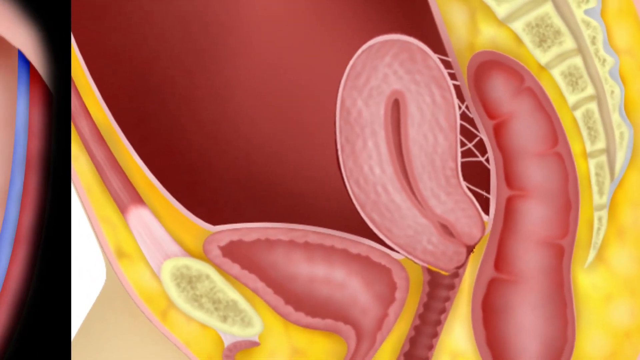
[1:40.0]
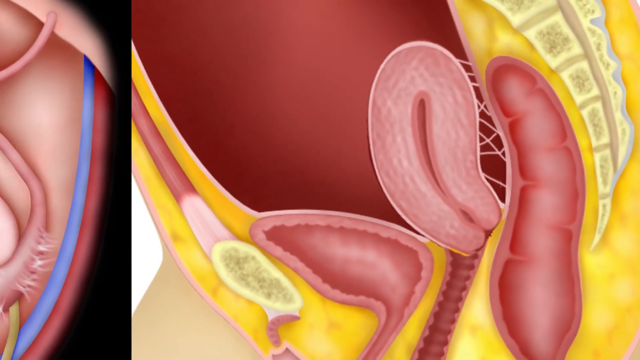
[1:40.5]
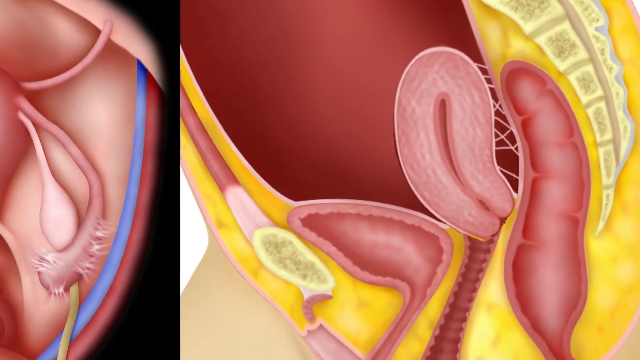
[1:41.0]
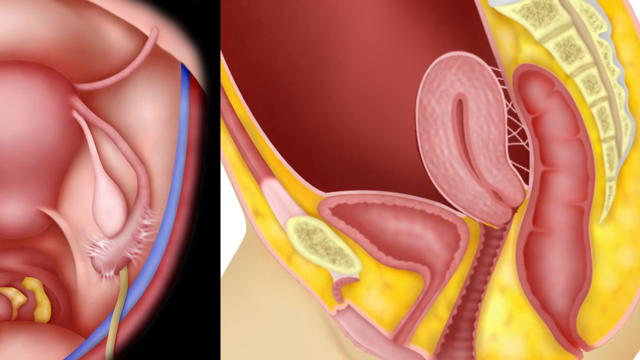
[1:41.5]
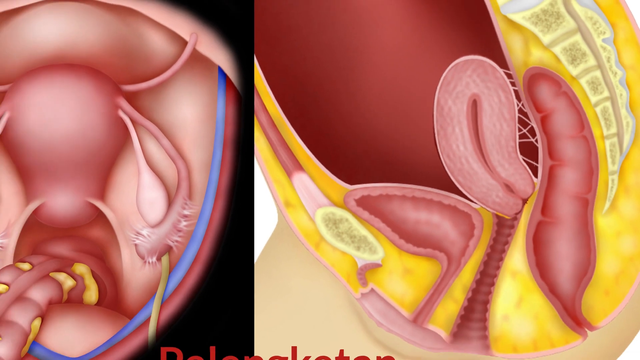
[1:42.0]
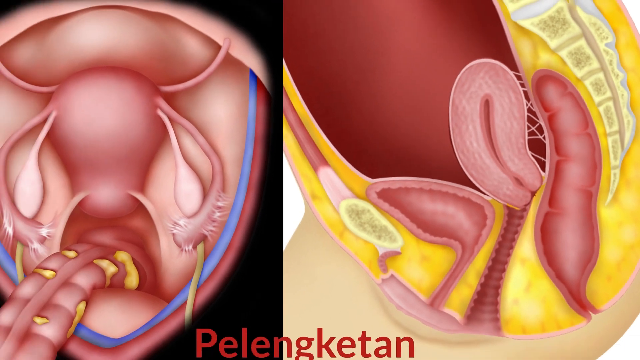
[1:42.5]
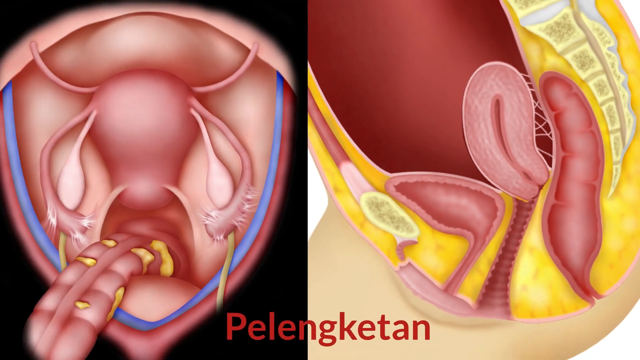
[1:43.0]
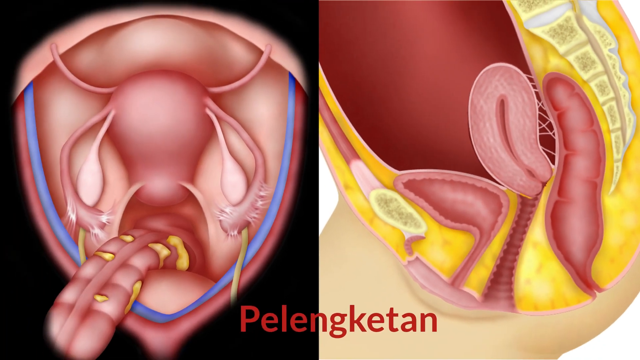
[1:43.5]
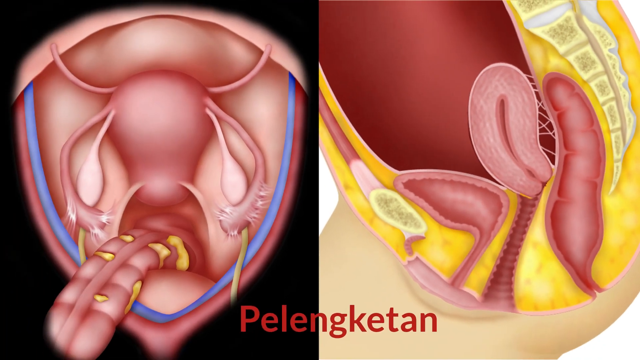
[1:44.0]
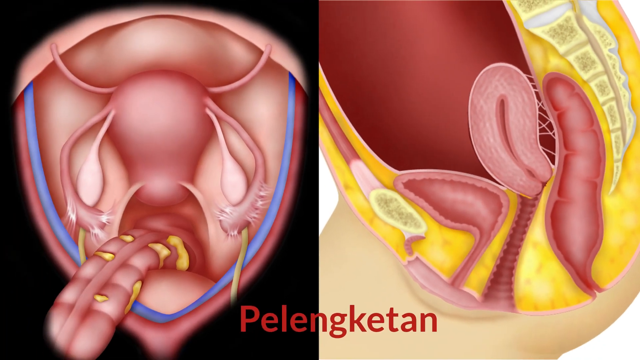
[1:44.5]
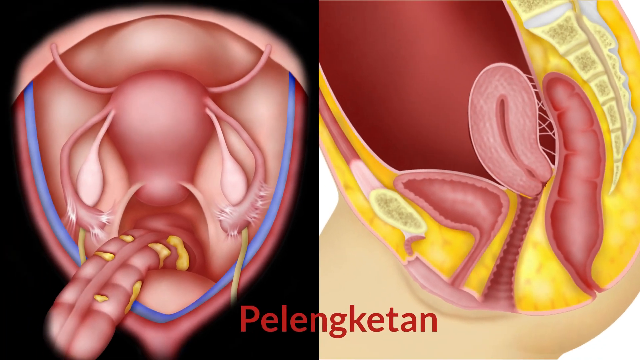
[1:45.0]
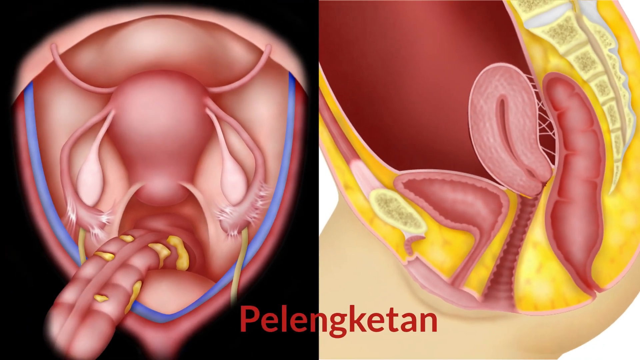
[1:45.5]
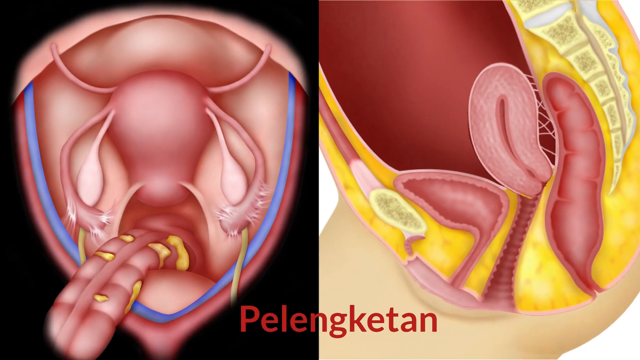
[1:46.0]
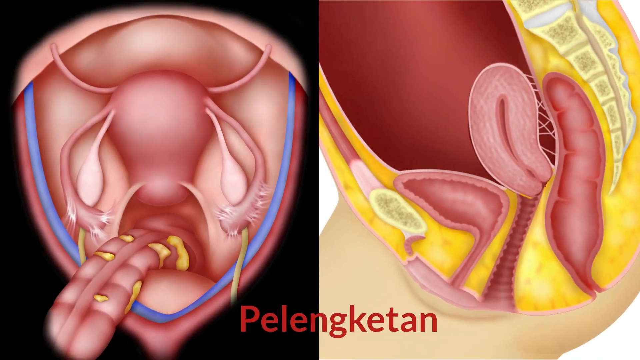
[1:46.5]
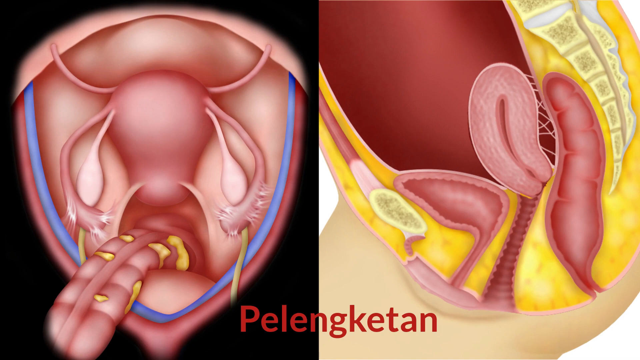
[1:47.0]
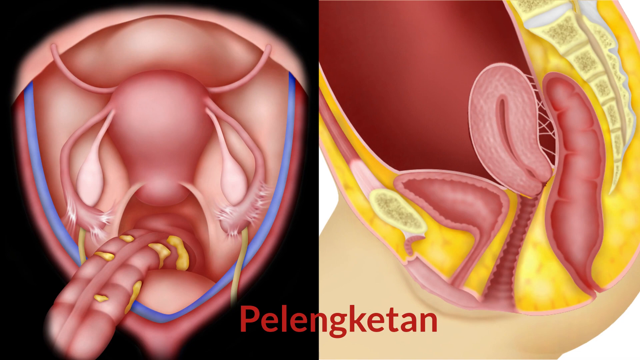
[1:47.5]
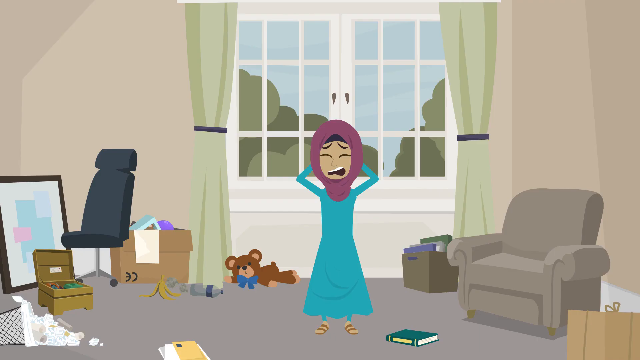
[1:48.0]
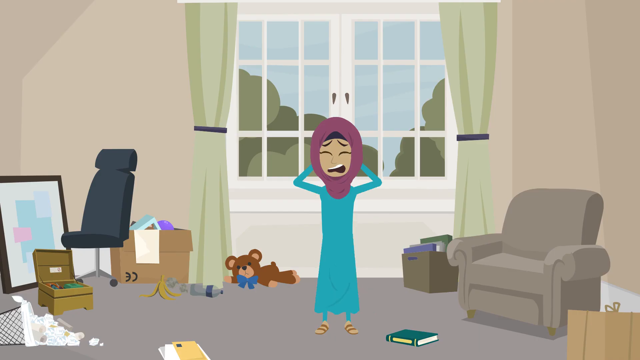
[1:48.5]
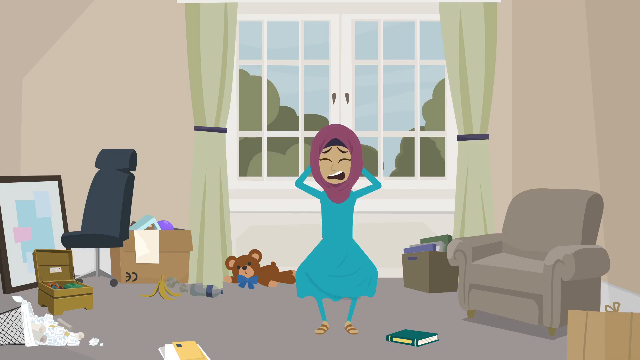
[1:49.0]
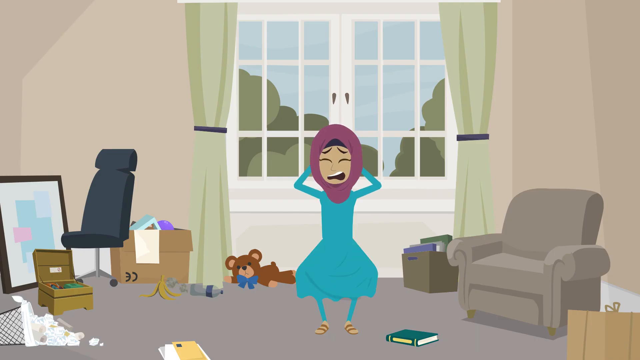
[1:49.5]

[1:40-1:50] A close-up of the uterus pulls back, and some text appears at the bottom. To the left is what looks like female fallopian tubes; on that left-hand side, against a black background, they are pink with sort of yellow spots and blue around them. The right picture shows the original uterus picture, in pink and yellow, from a side view. Then a woman in her house is shown moving her hand, yelling, and stomping her feet.